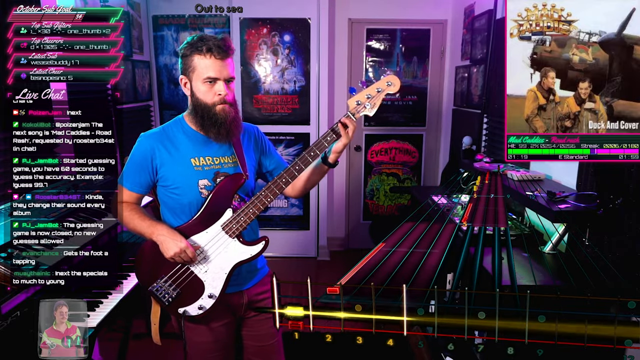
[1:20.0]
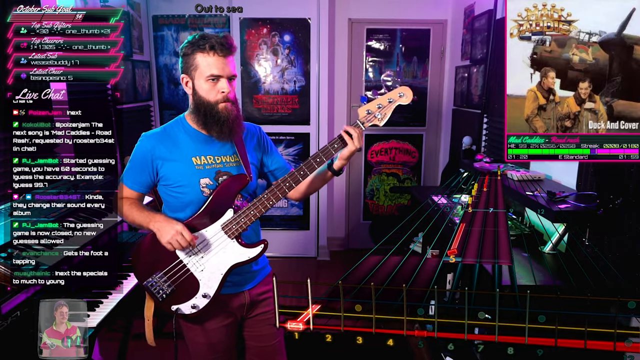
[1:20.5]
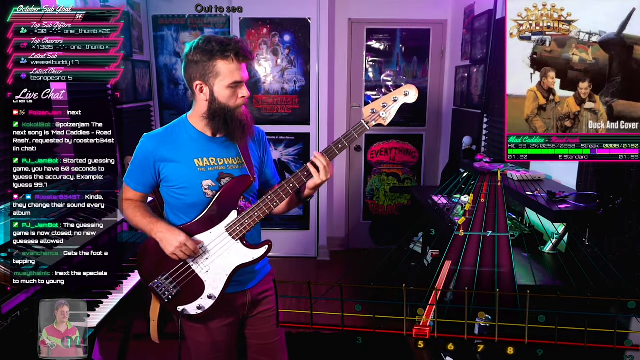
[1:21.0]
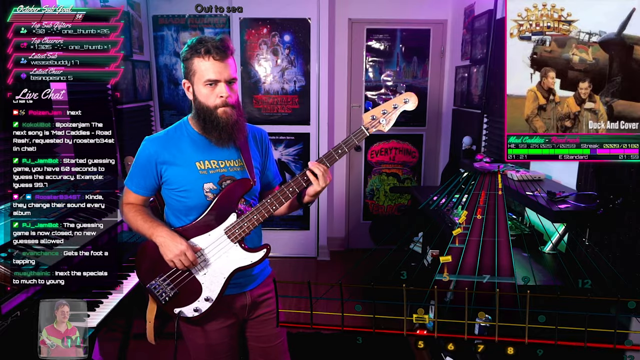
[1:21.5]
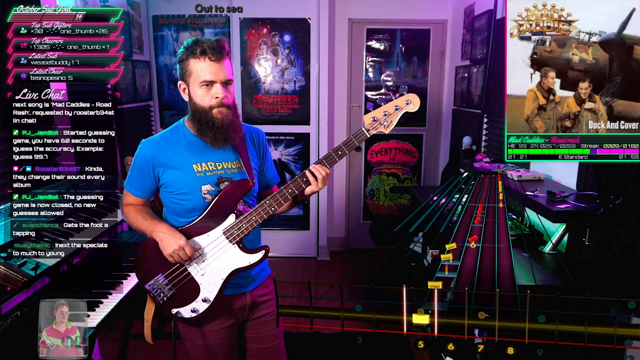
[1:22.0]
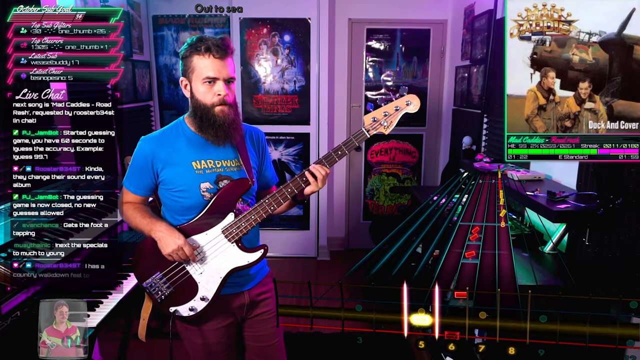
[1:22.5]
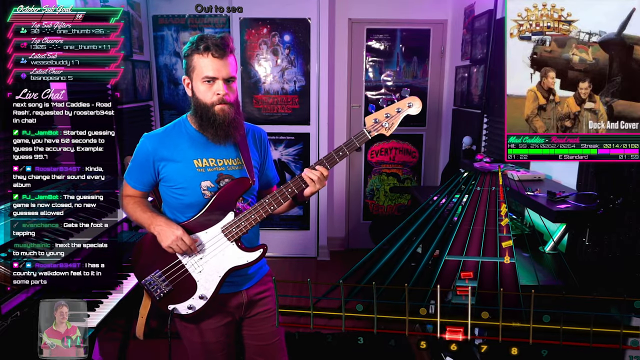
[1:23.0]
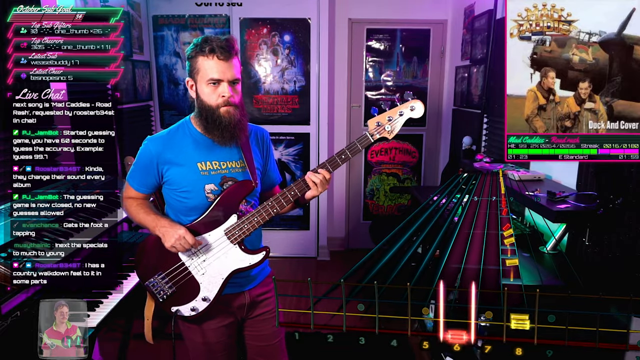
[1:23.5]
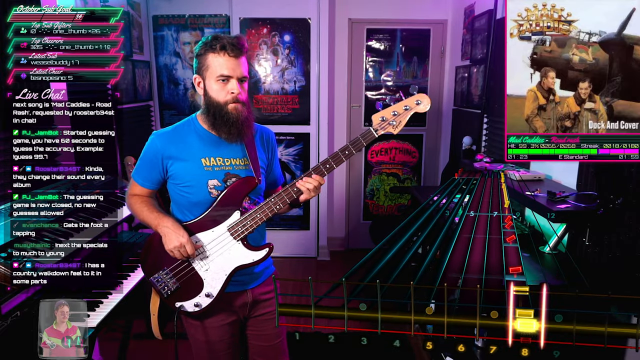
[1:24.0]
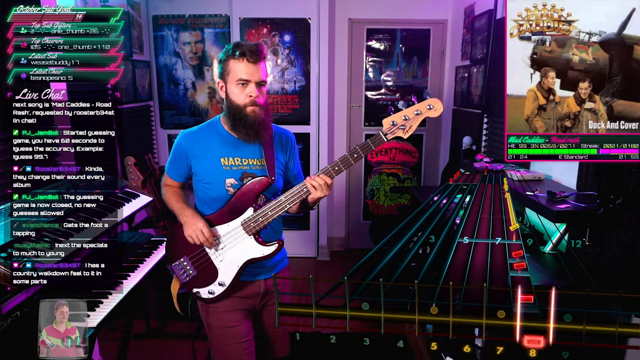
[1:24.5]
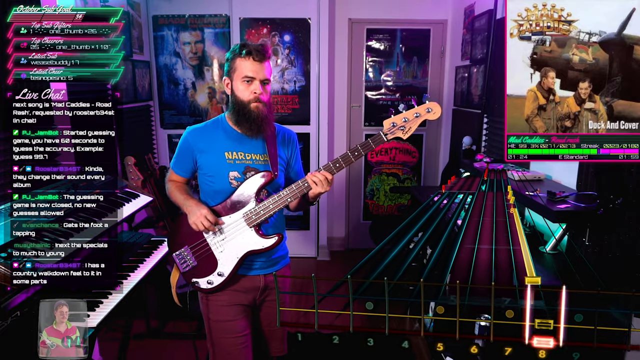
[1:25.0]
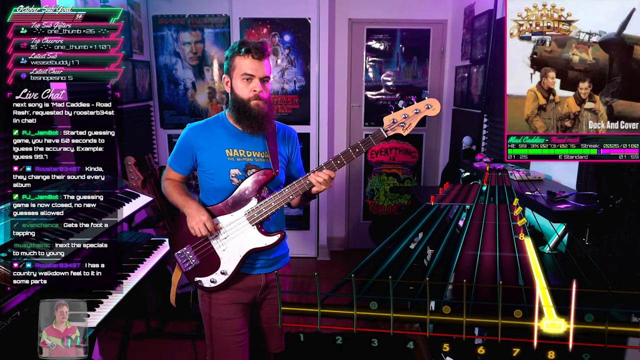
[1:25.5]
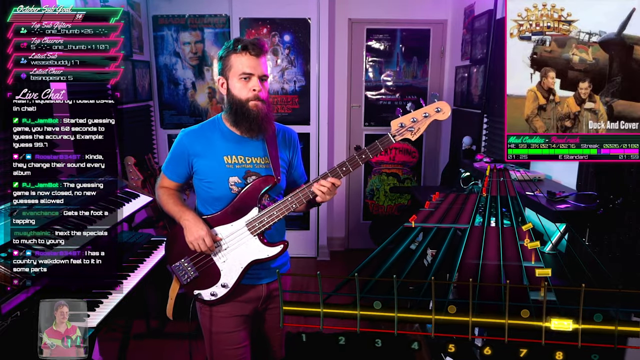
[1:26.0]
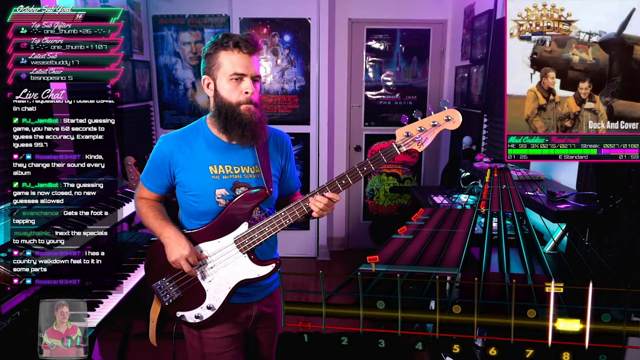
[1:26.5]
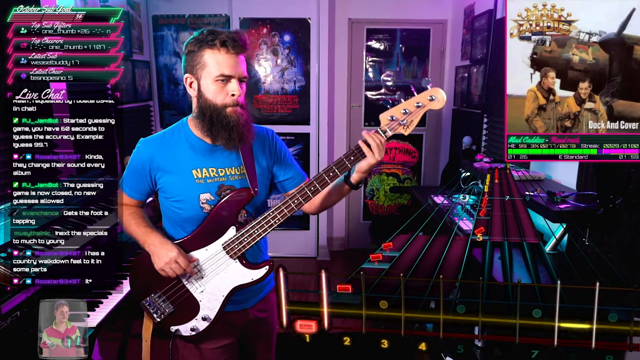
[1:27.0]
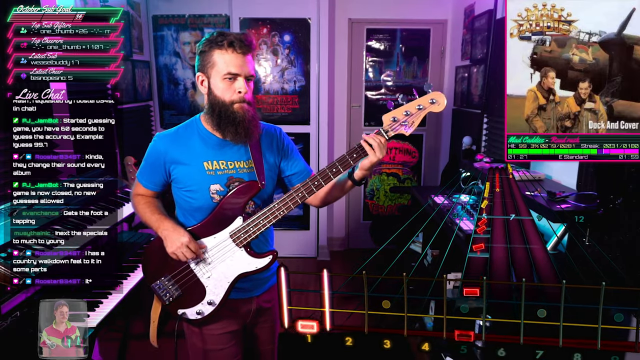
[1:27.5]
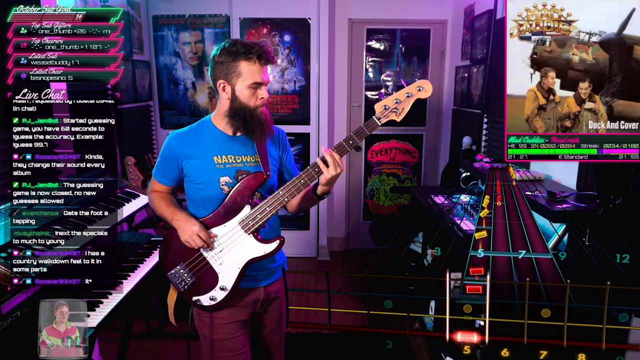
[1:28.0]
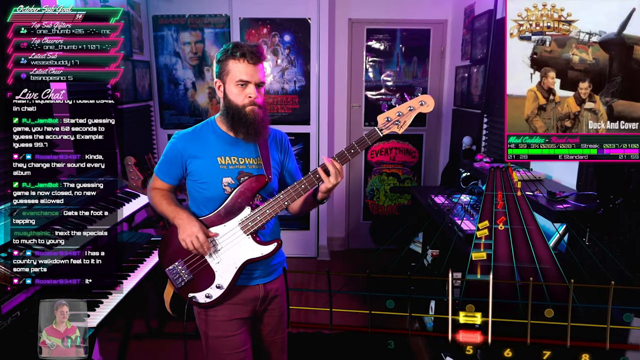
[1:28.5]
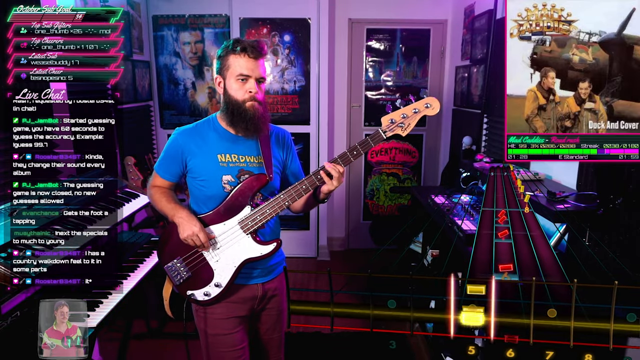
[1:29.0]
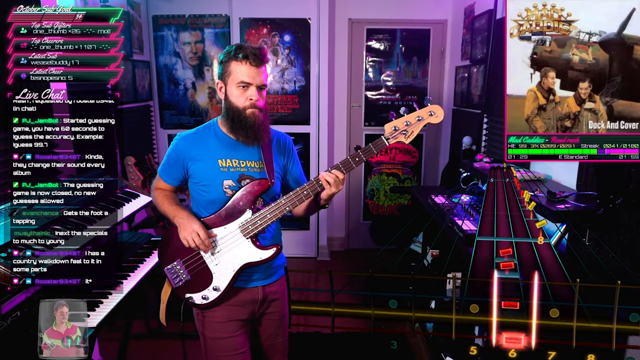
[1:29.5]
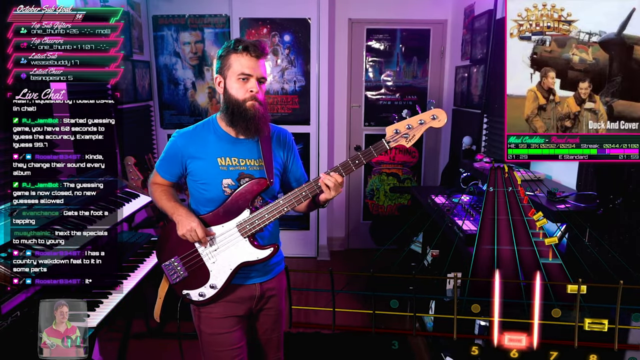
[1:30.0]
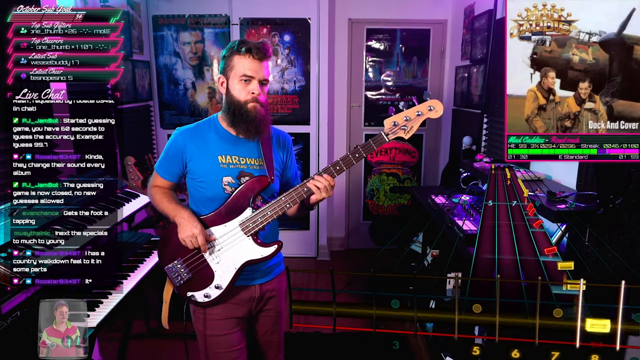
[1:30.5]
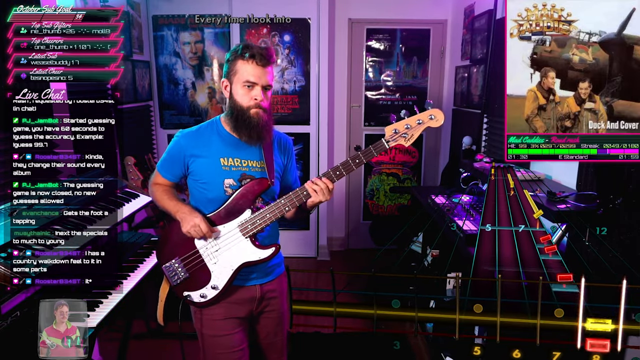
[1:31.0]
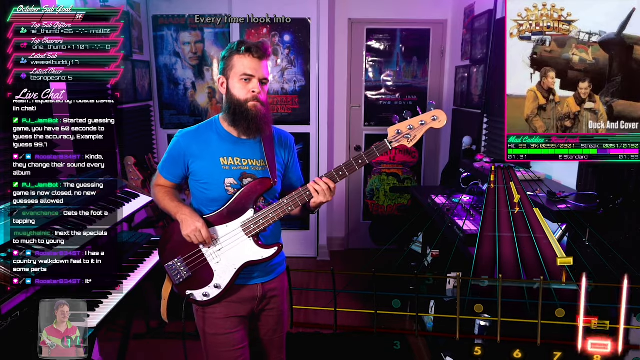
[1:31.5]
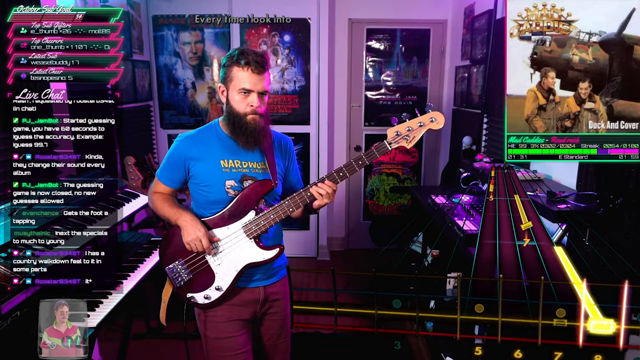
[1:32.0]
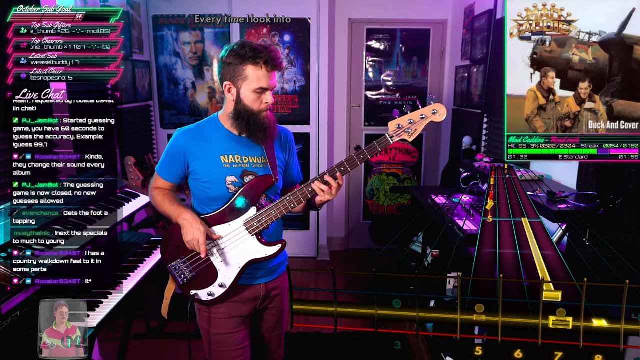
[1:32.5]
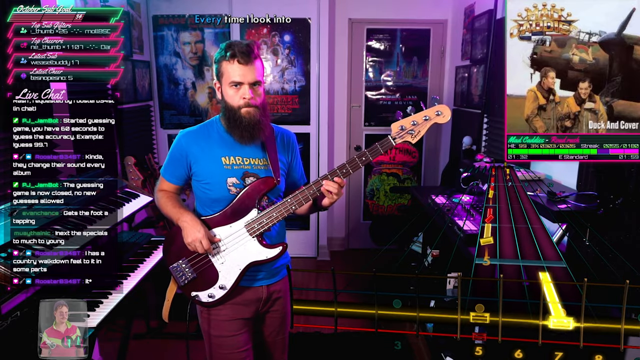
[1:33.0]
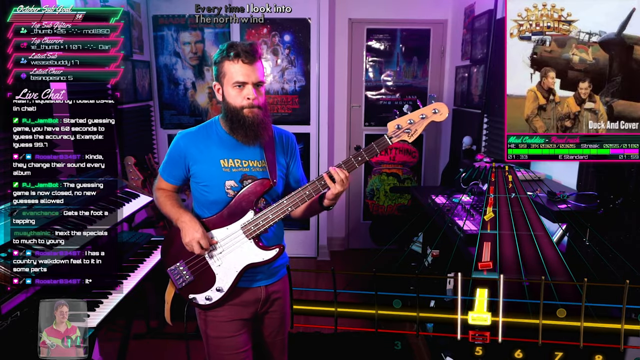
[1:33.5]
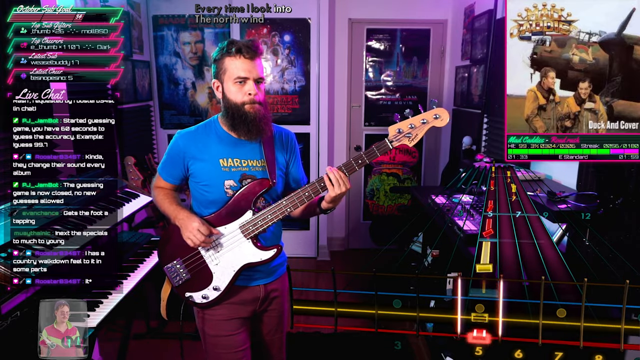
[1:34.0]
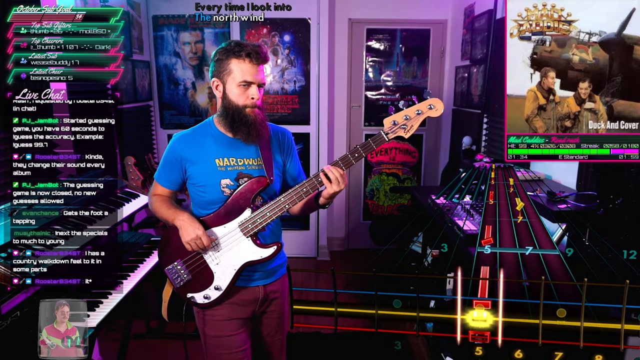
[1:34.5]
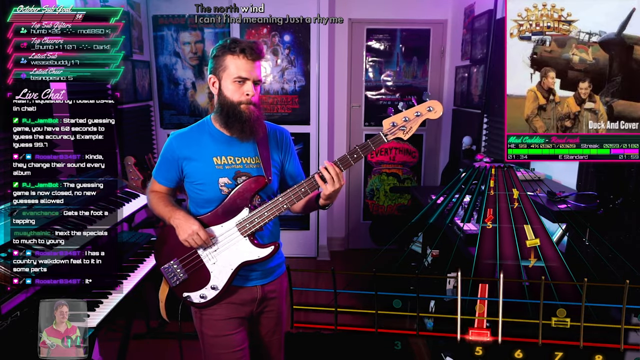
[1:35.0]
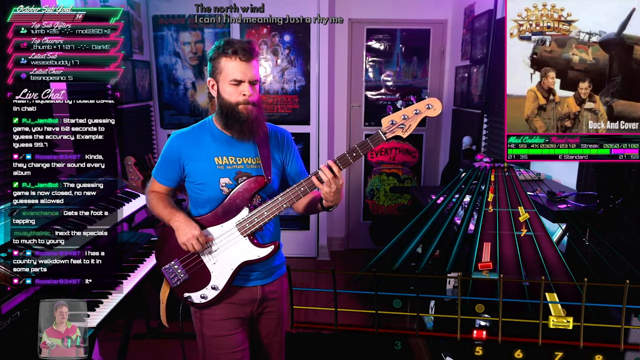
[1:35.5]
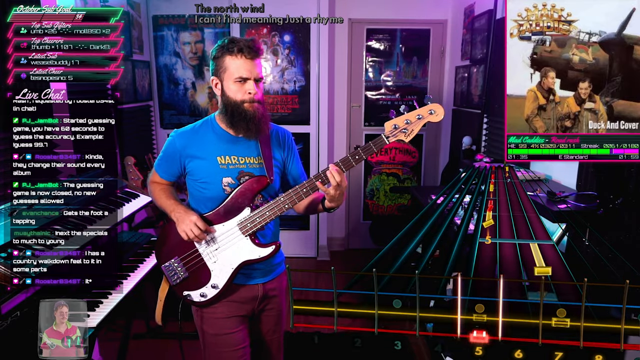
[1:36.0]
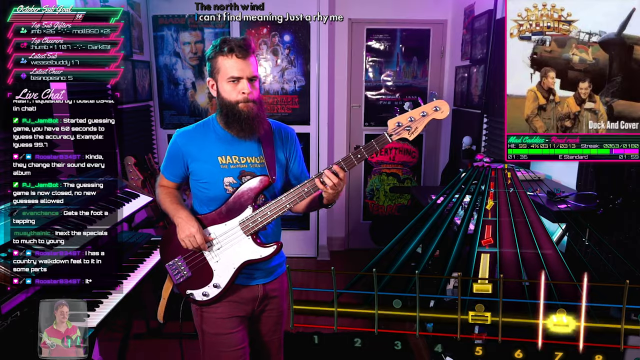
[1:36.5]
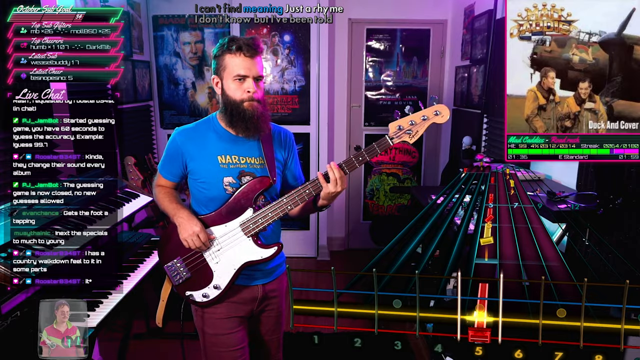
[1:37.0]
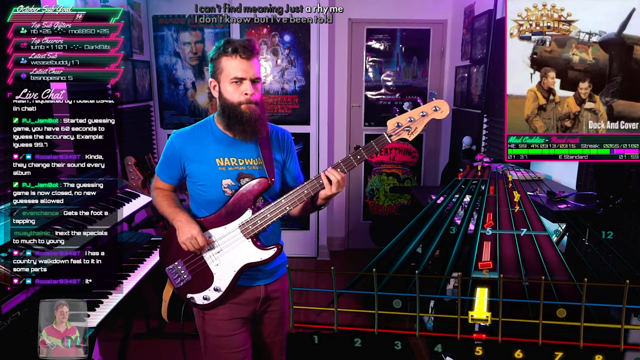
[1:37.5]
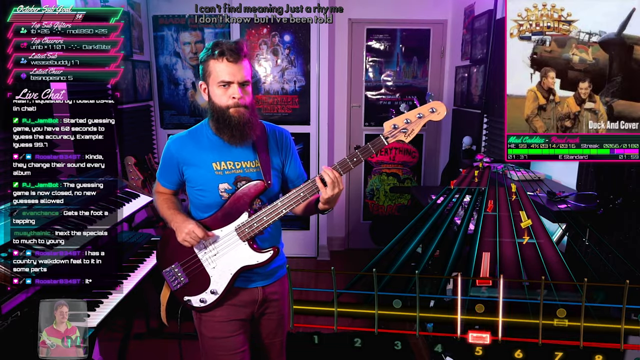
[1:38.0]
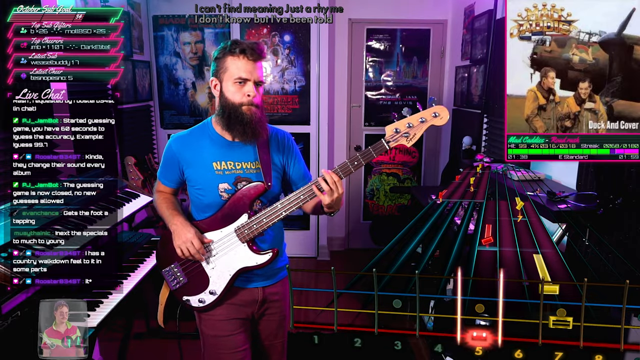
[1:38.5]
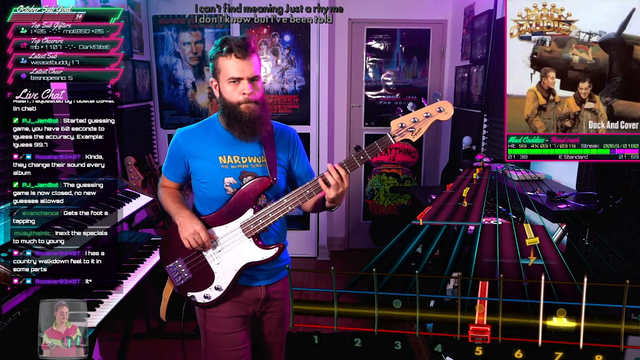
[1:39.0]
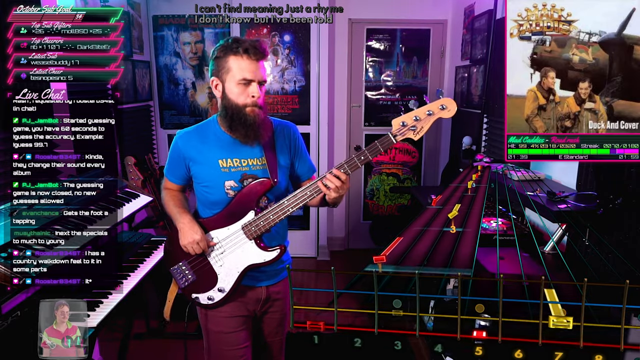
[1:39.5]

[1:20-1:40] The progression bar below the album cover shows the song apparently nearing its end. He keeps hitting the notes and paying close attention to them. The chat continues, with different users visible.